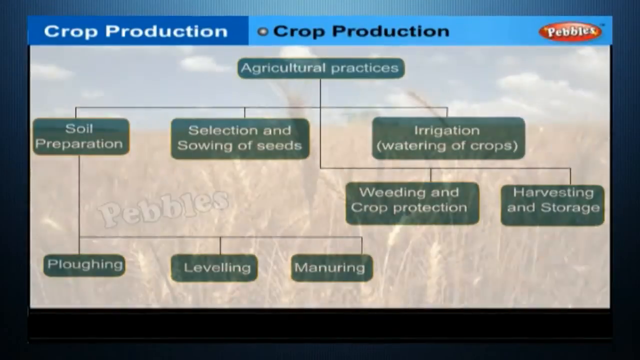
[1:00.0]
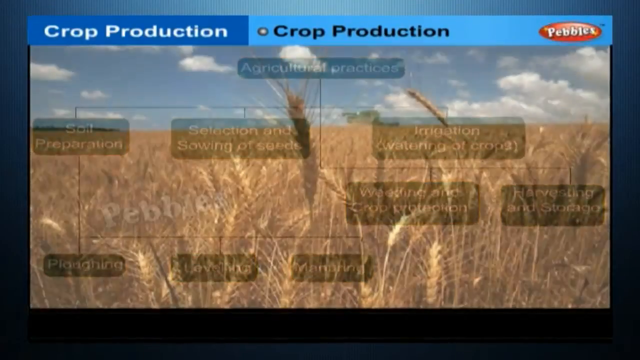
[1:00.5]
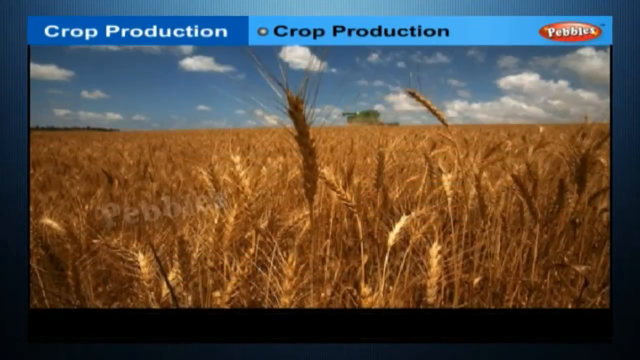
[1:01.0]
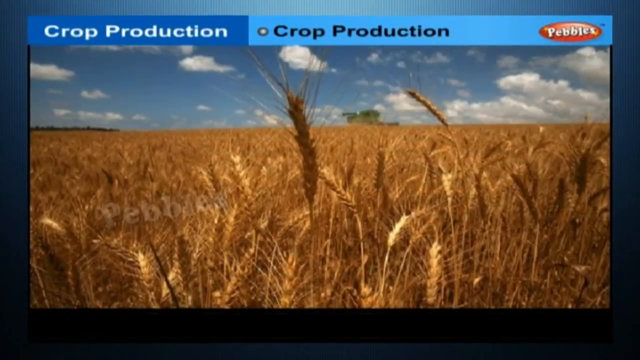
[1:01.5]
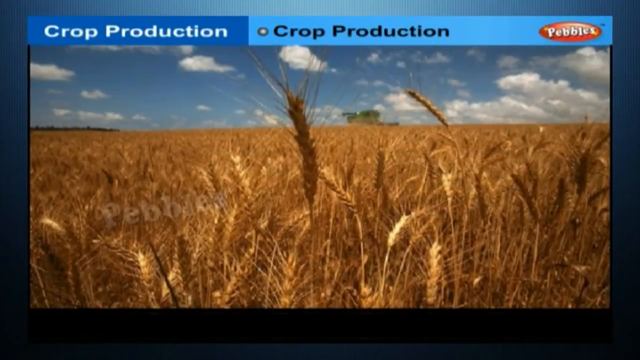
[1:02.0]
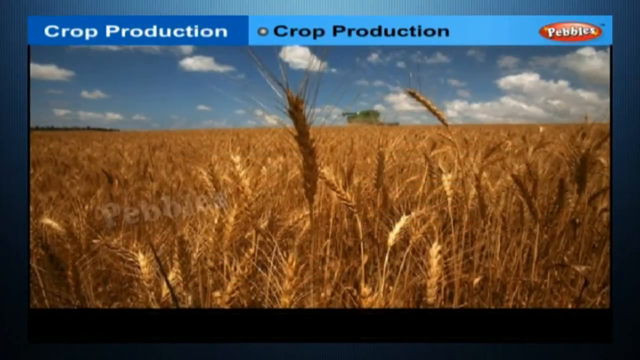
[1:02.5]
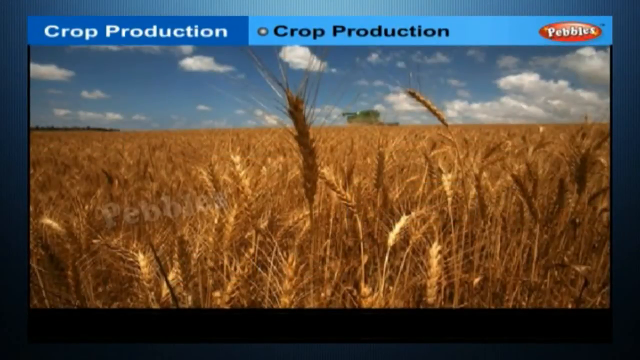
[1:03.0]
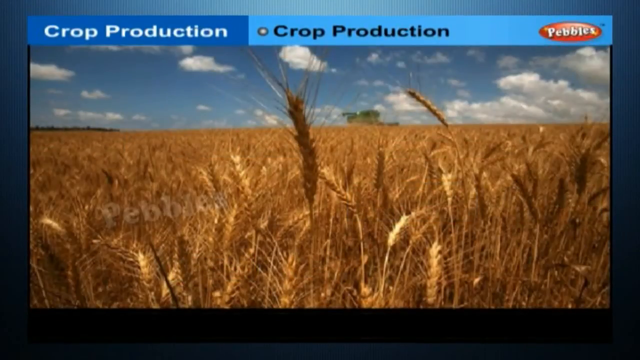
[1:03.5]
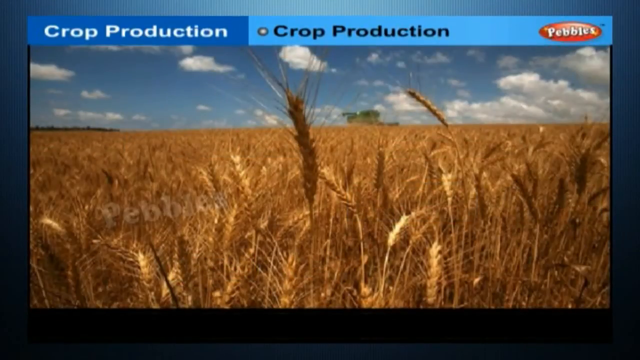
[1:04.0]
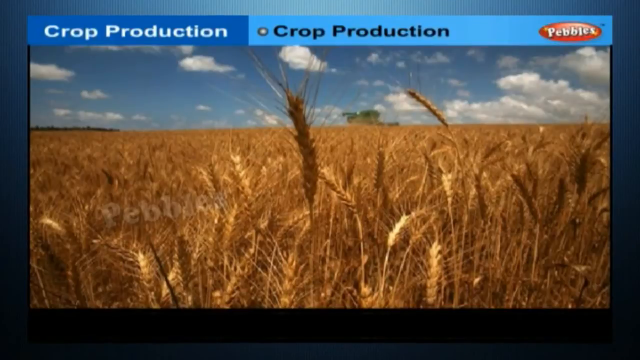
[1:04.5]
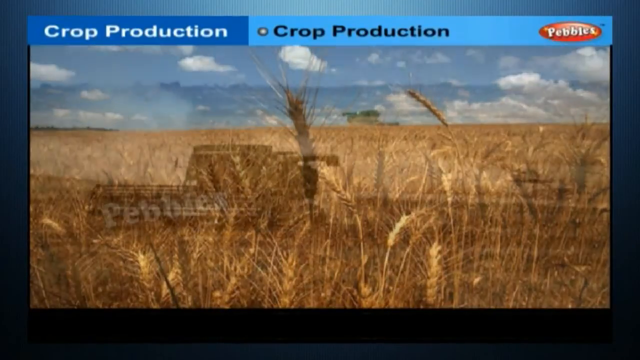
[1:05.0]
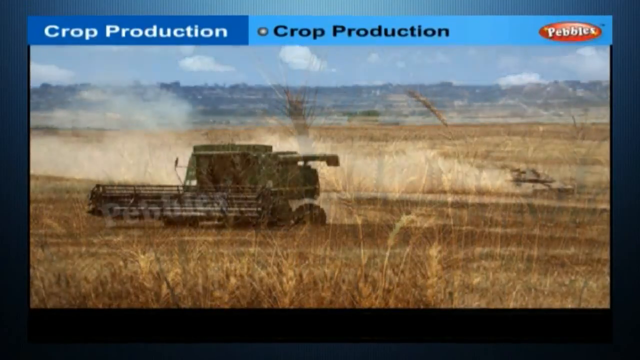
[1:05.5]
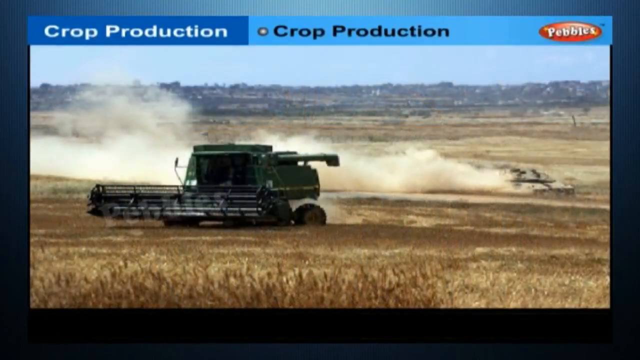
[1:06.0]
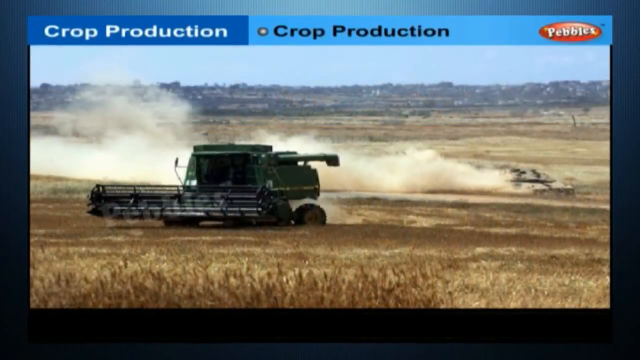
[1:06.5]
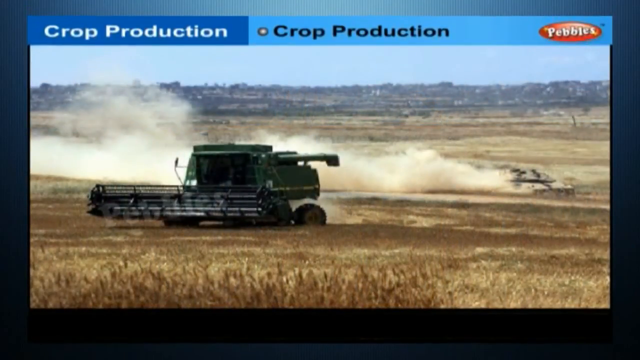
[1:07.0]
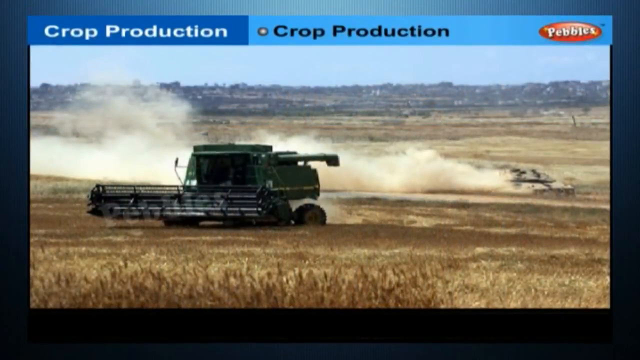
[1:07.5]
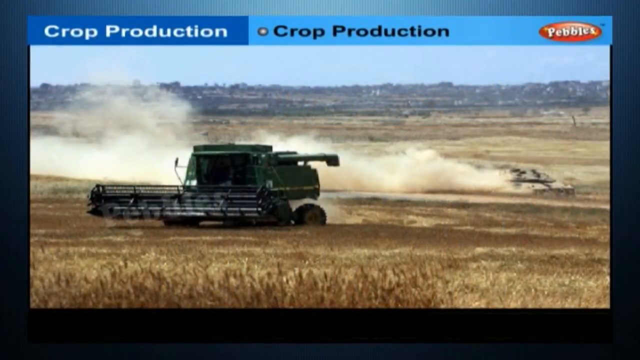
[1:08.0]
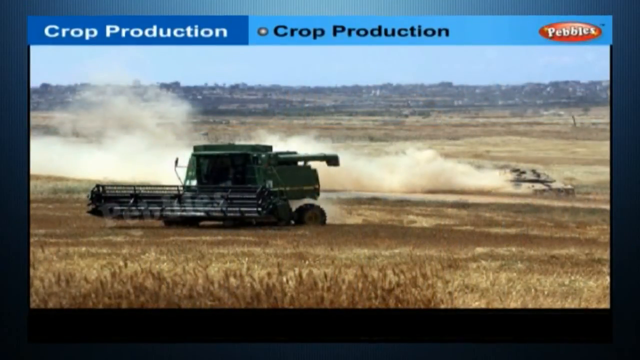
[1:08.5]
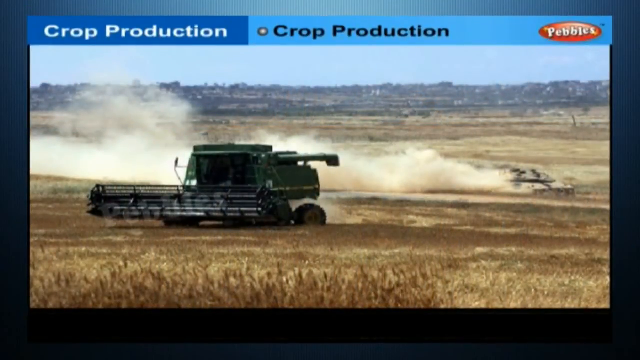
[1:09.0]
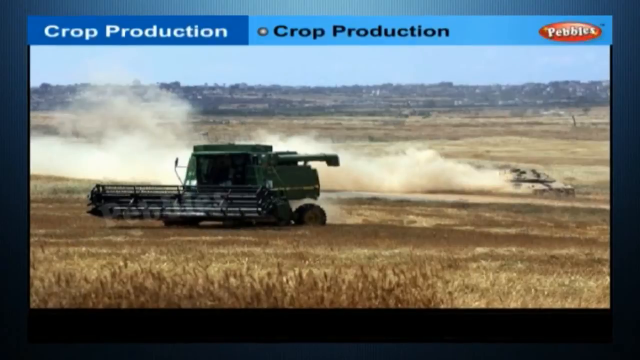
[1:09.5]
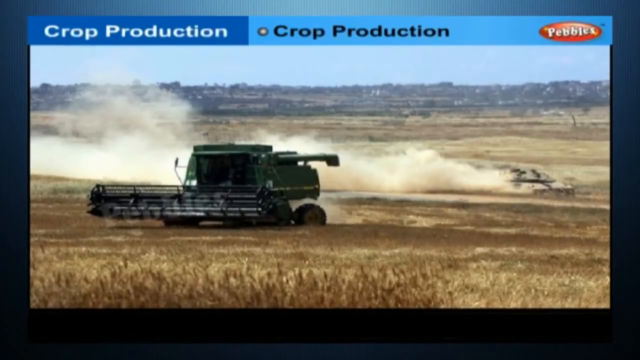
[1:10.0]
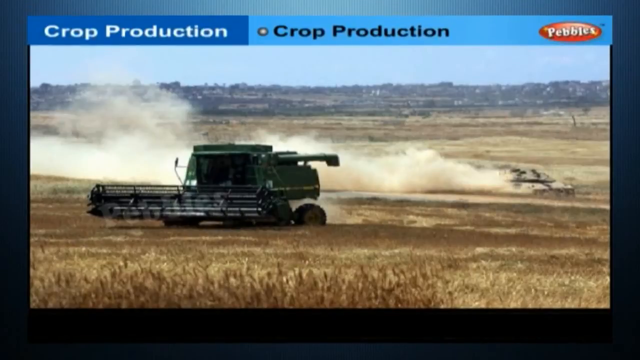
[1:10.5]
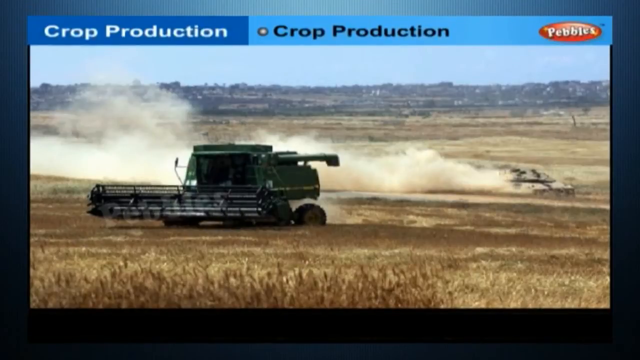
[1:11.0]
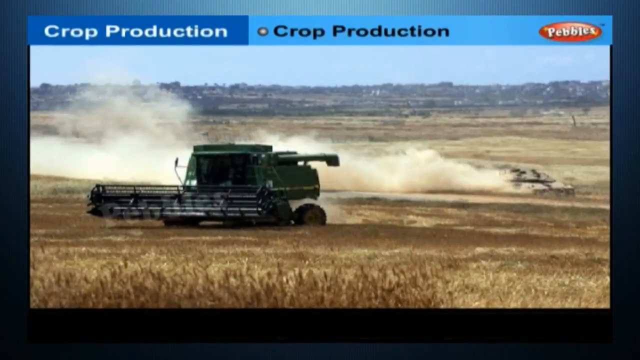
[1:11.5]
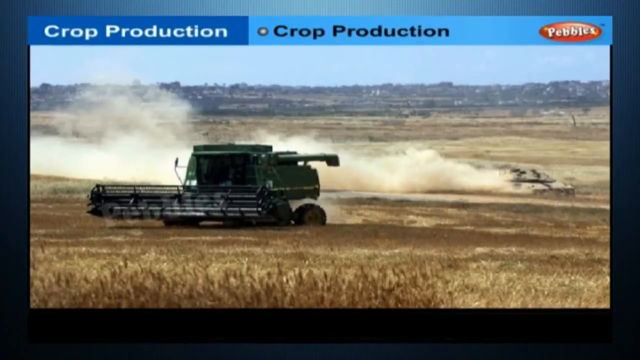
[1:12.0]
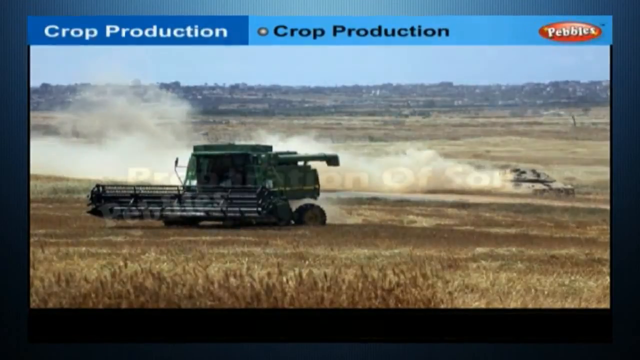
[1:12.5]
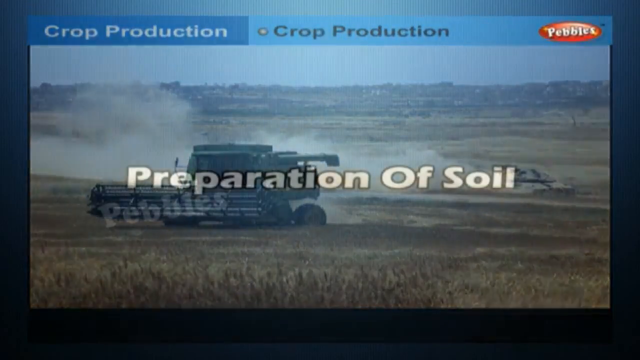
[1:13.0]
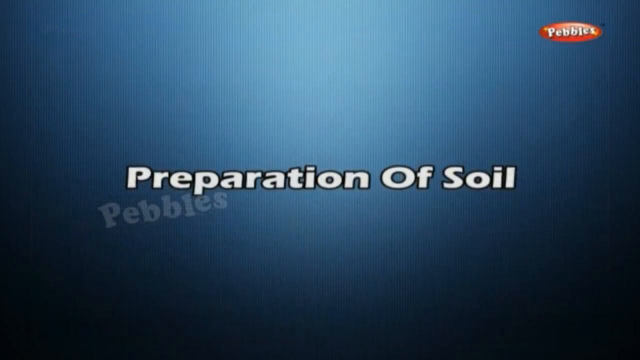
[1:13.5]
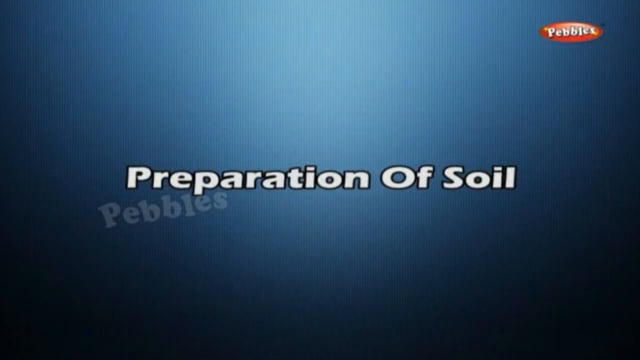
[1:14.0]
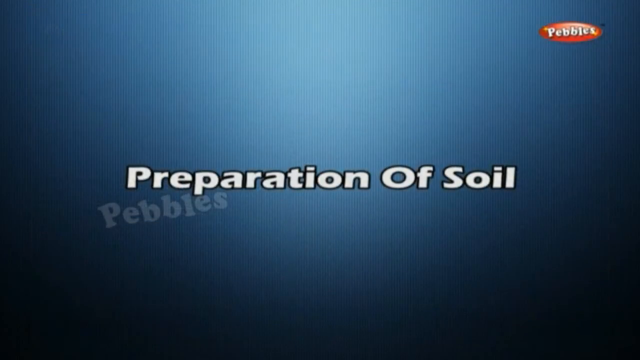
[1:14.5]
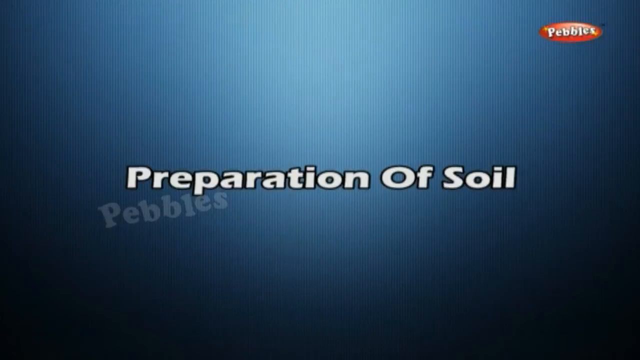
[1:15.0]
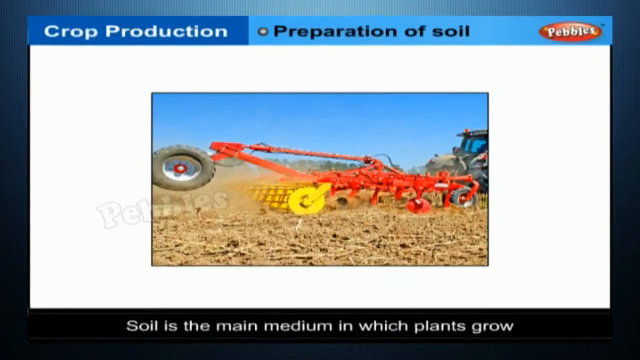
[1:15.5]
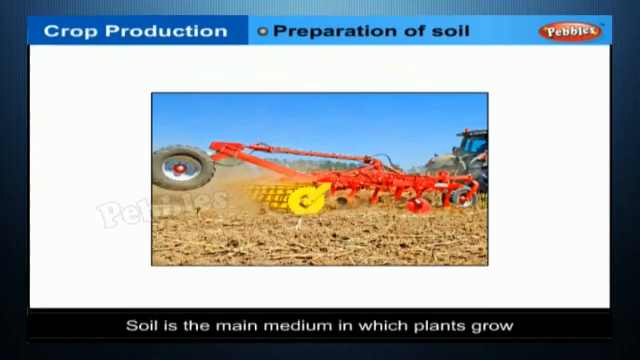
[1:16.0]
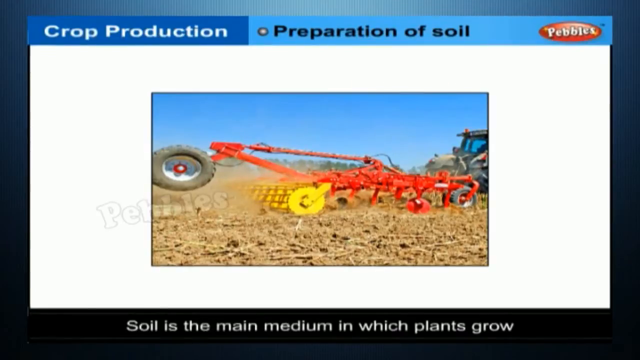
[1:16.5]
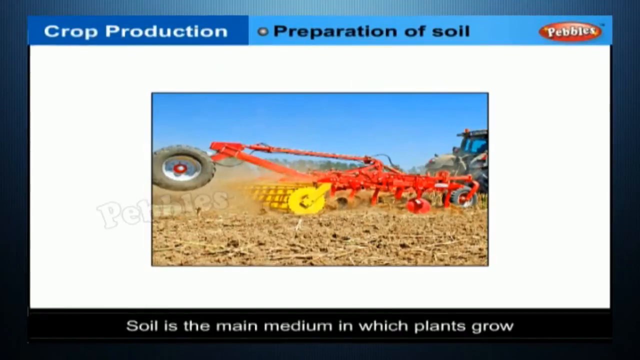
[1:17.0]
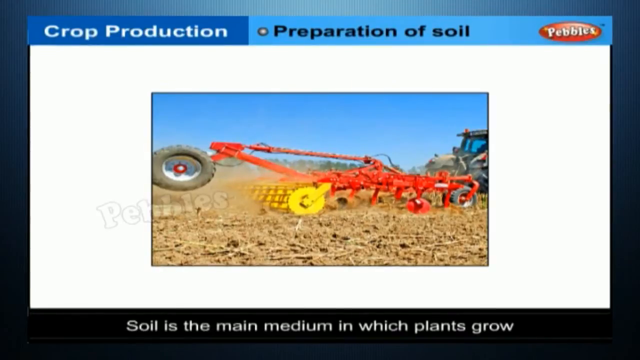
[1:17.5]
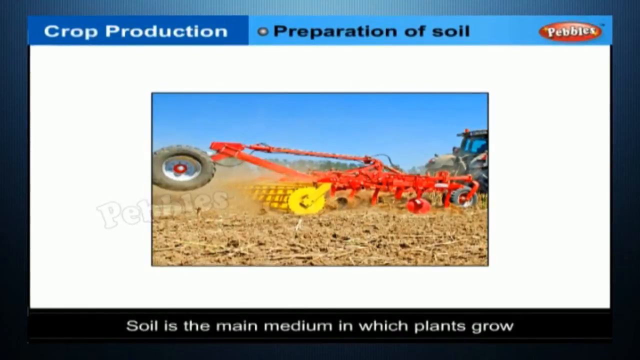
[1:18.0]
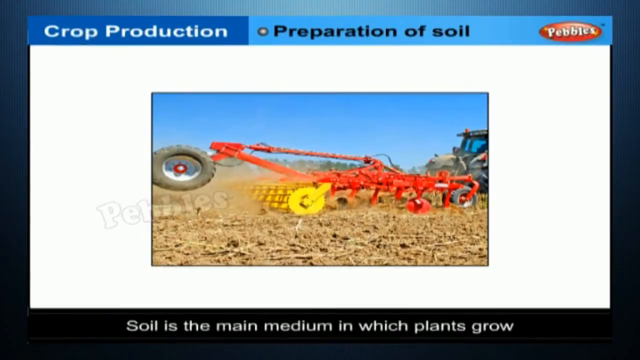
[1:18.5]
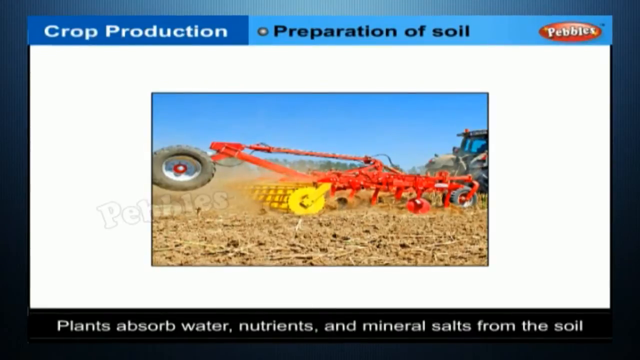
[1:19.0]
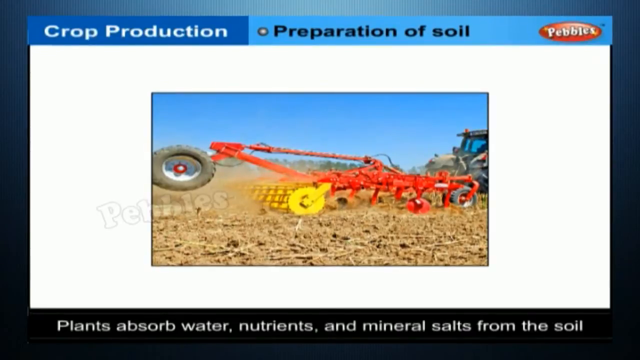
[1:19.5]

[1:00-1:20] An image shows a wheat field with a close-up of some ears of wheat in the foreground, spiky shoots coming off the main seeds on the stem tips. Another image shows a combine harvester working in a wheat field, again with the close-up of wheat ears in the foreground and dust from the working machines in the background. The harvester has a long blade at the front, the cabin for the worker at the front, and a chute at the rear of the machine for pouring out the cut wheat for transfer into the trailer. A heading, "preparation of soil", then appears on a blue background, followed by an image of a red plough with red blades at the back of the machine, a yellow cutter at the front and a guidance wheel also at the front. The caption at the bottom reads "Soil is the main medium in which plants grow. Plants absorb water, nutrients and mineral salts from the soil."